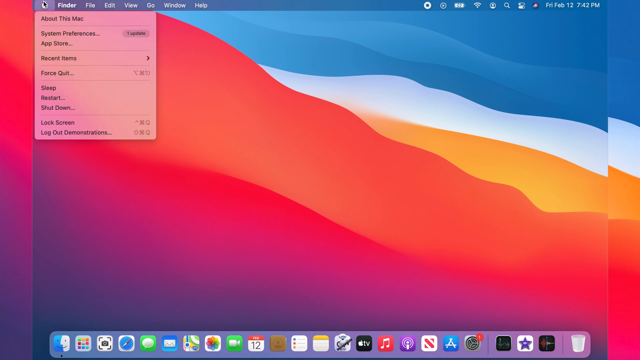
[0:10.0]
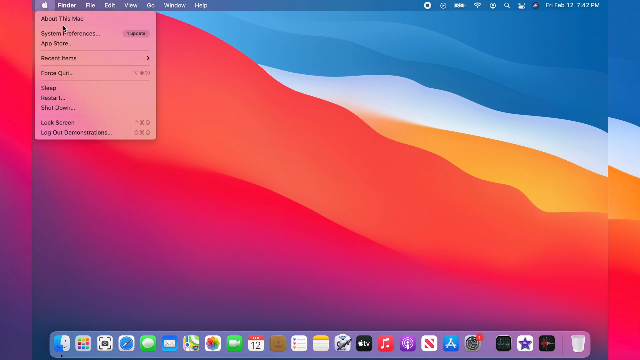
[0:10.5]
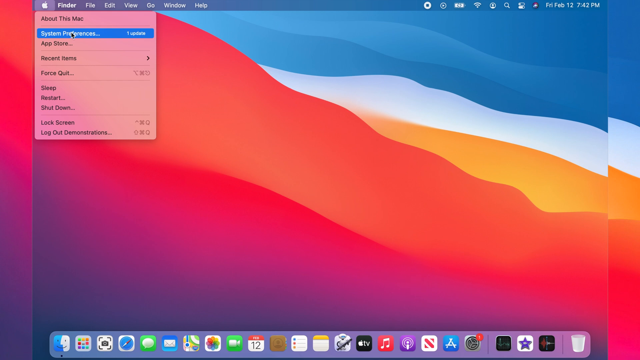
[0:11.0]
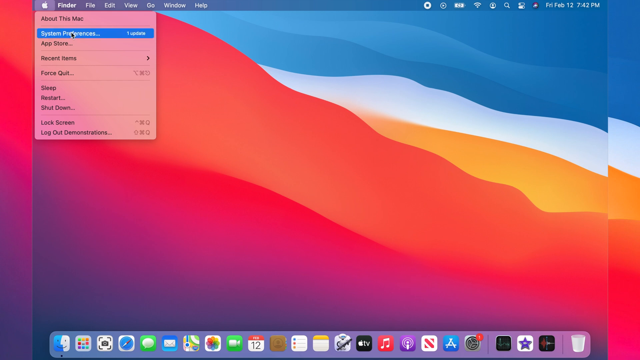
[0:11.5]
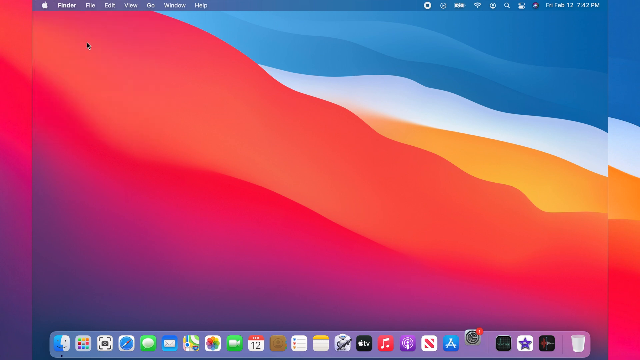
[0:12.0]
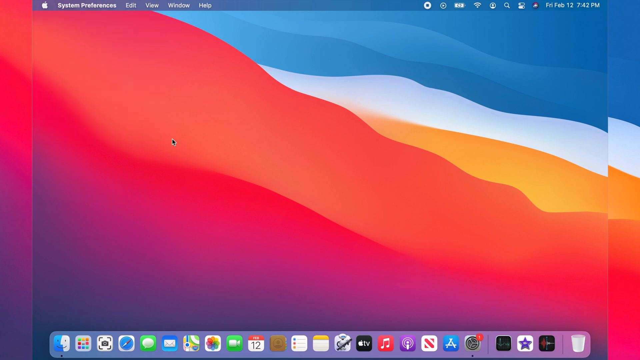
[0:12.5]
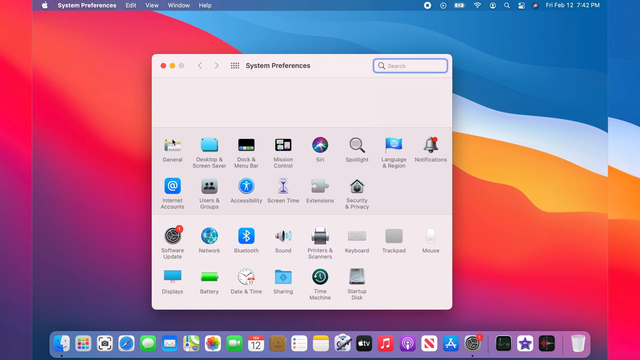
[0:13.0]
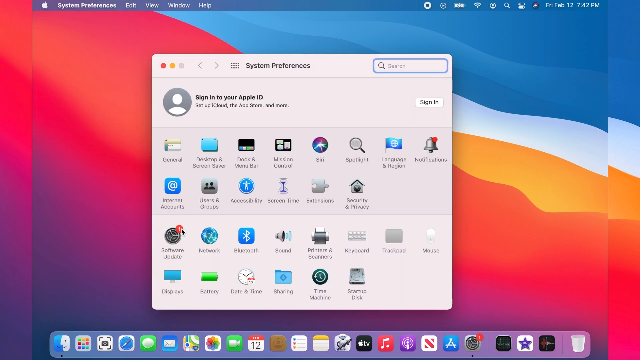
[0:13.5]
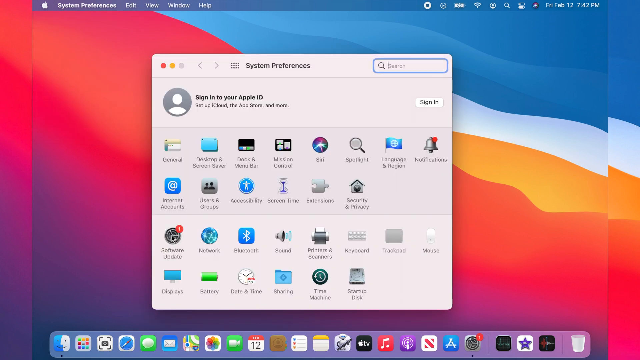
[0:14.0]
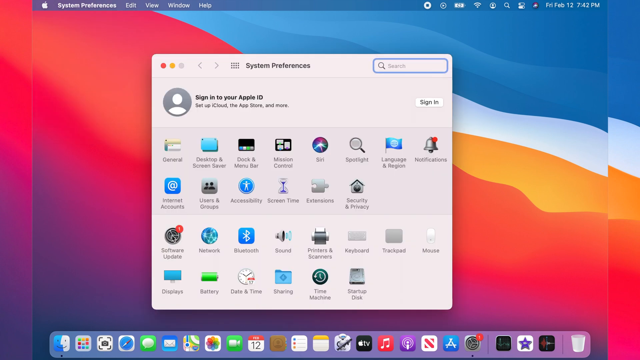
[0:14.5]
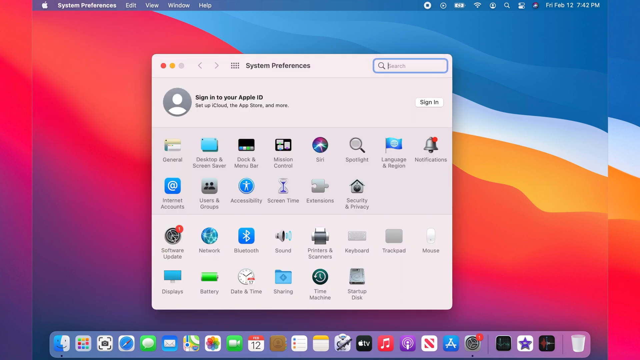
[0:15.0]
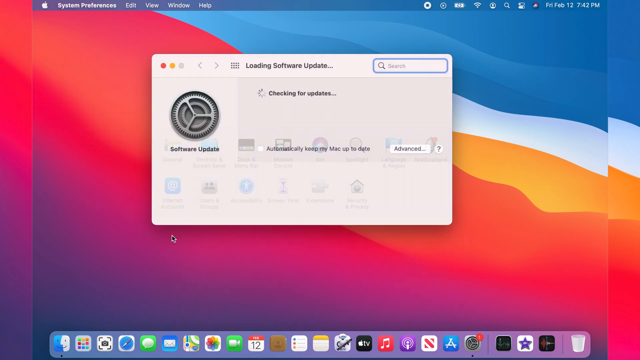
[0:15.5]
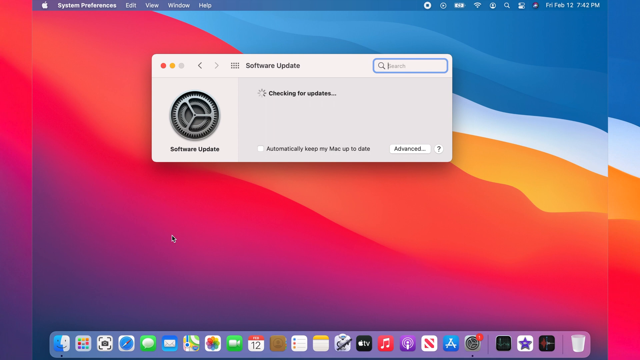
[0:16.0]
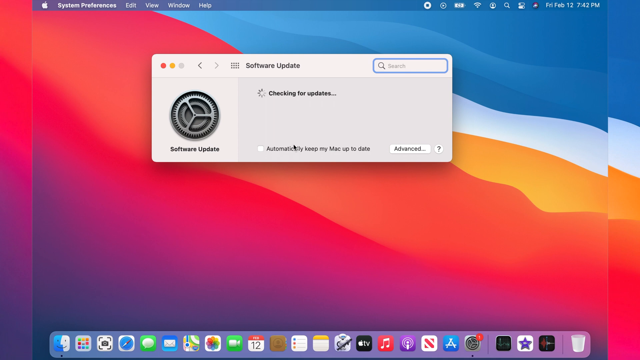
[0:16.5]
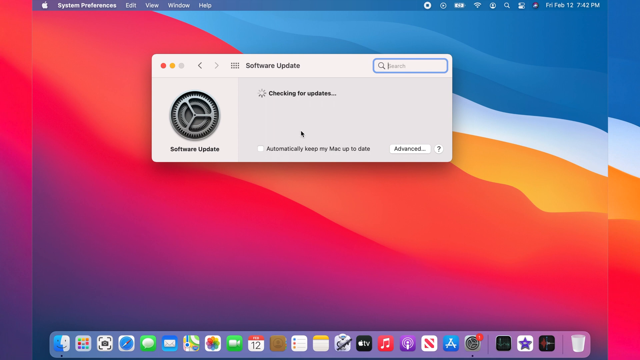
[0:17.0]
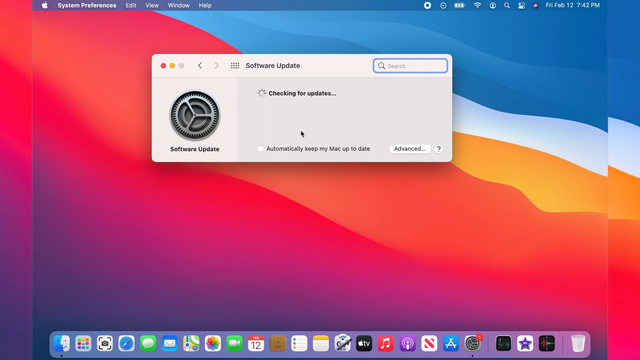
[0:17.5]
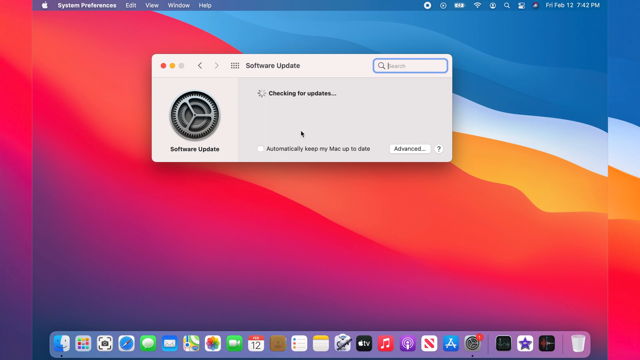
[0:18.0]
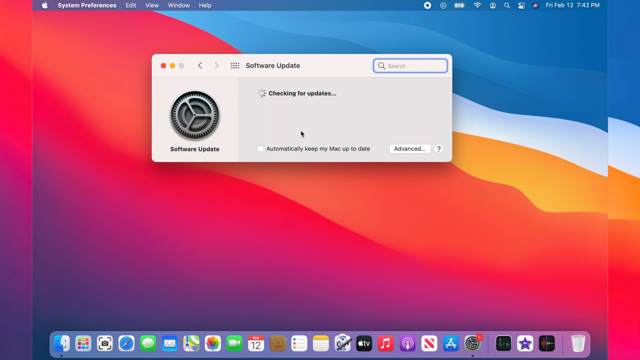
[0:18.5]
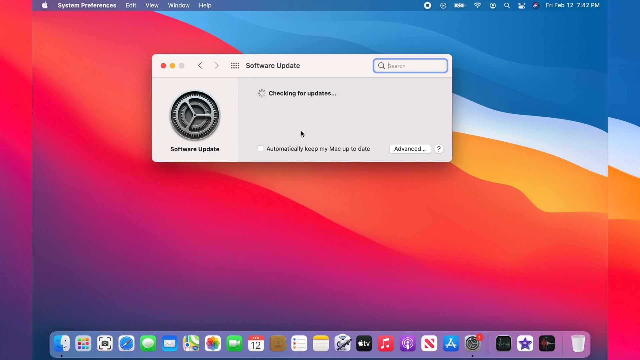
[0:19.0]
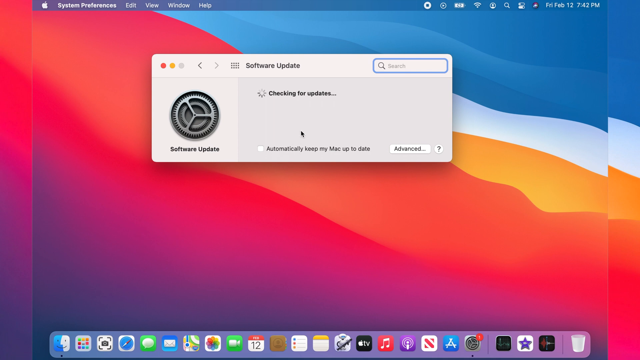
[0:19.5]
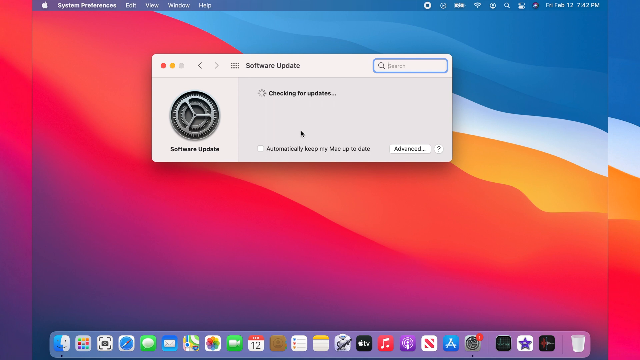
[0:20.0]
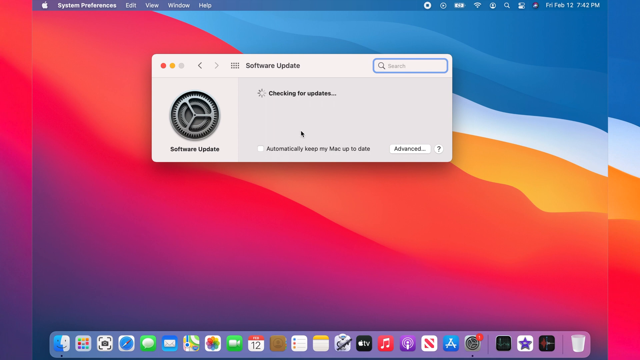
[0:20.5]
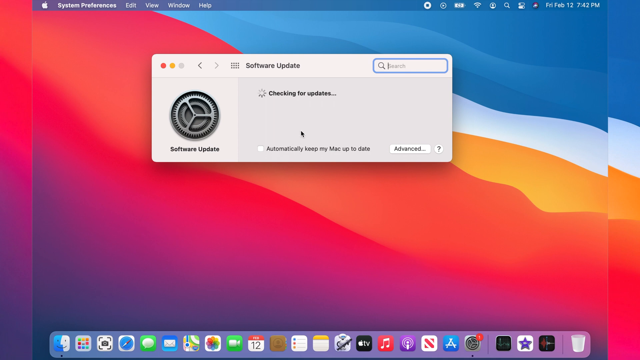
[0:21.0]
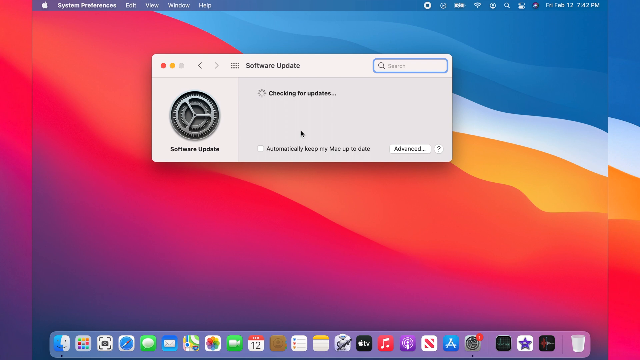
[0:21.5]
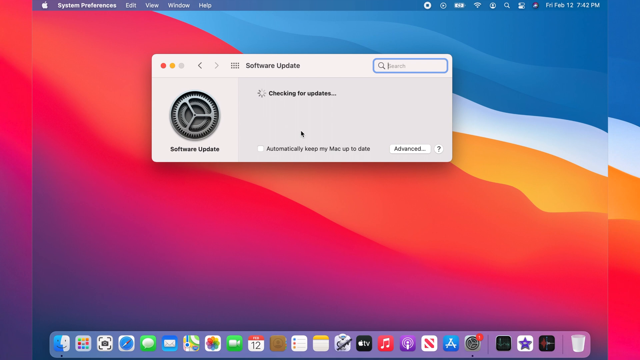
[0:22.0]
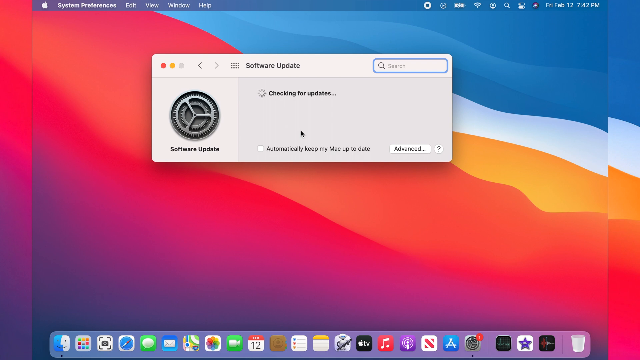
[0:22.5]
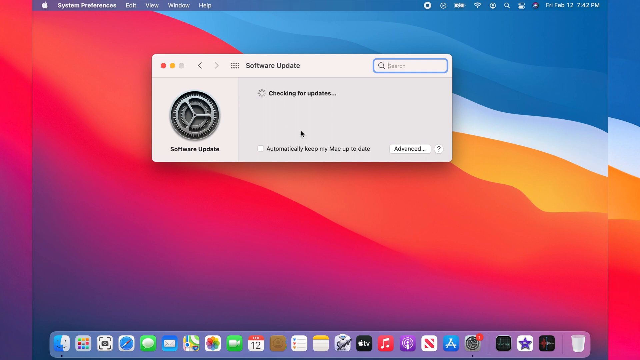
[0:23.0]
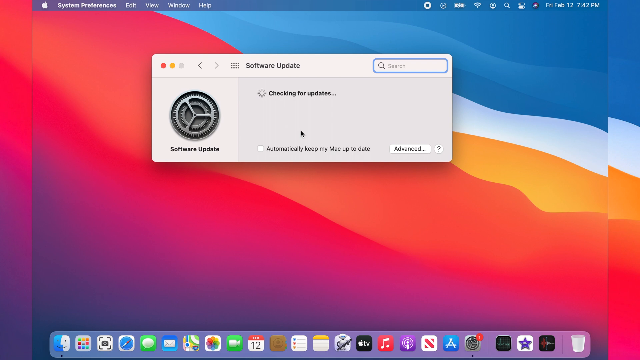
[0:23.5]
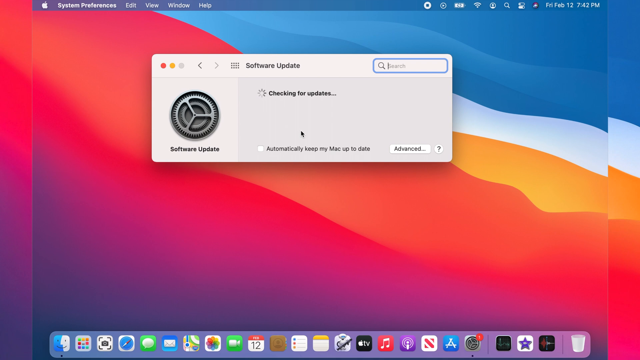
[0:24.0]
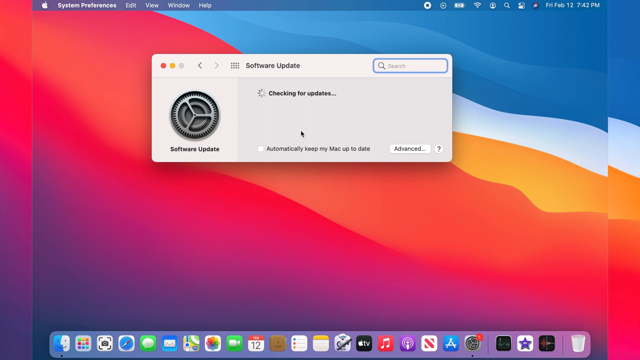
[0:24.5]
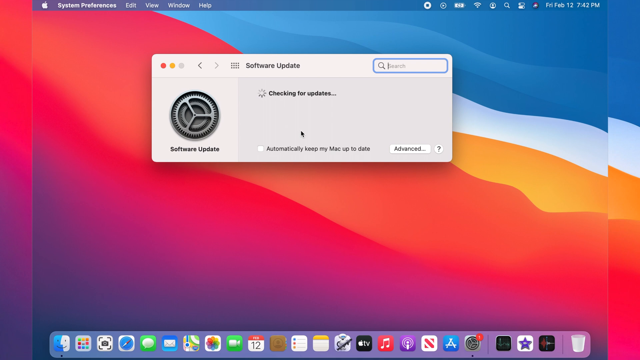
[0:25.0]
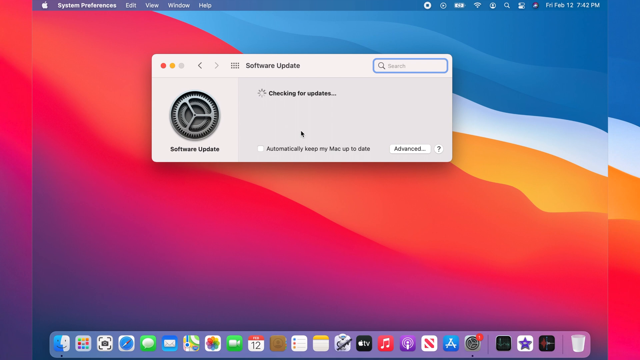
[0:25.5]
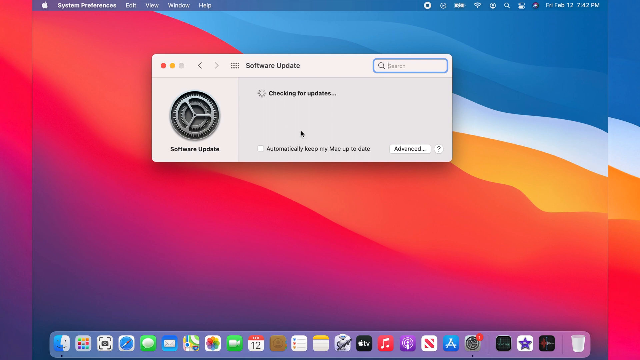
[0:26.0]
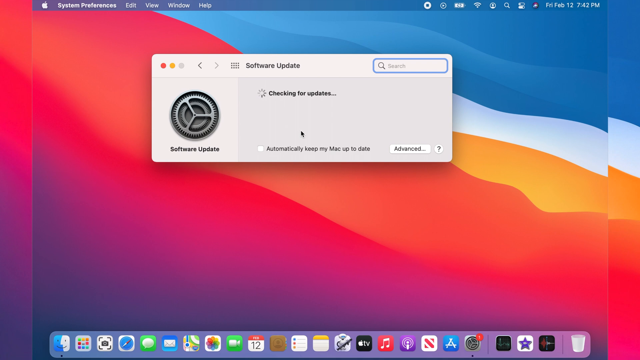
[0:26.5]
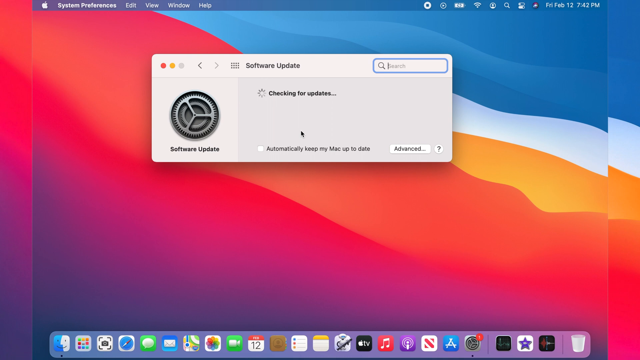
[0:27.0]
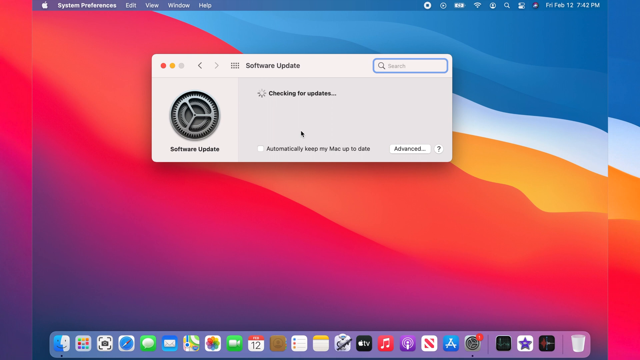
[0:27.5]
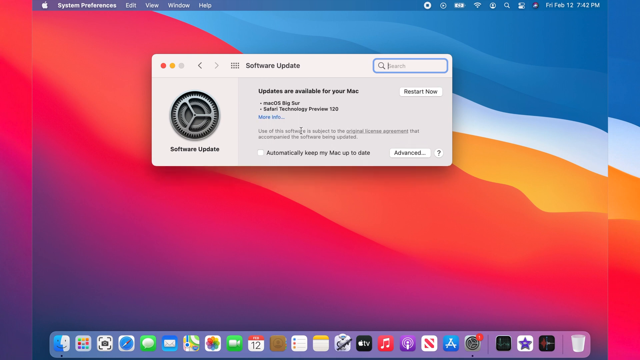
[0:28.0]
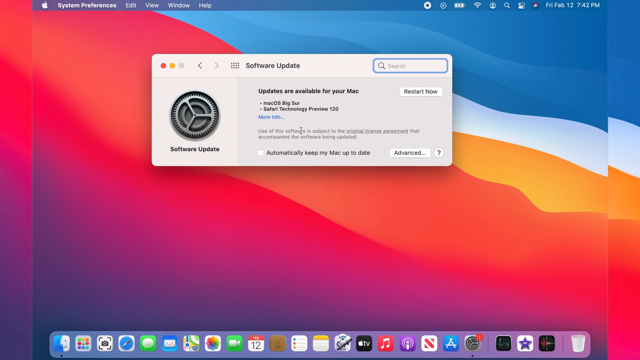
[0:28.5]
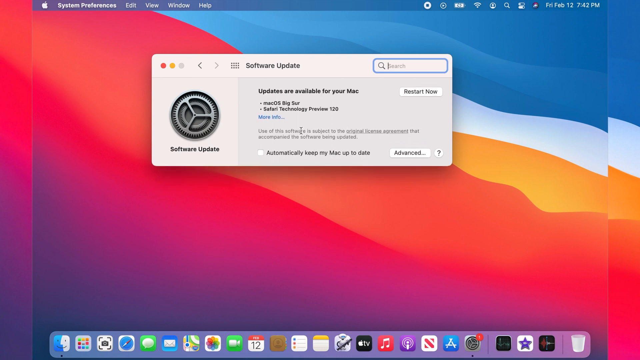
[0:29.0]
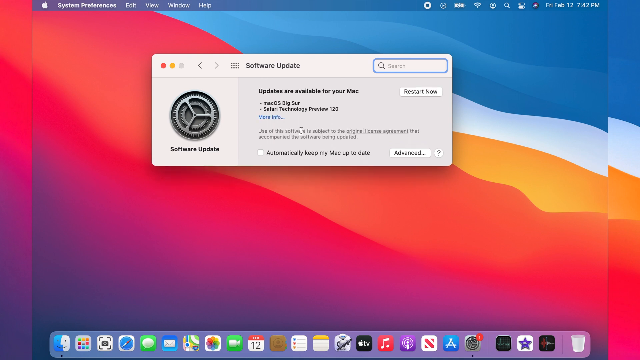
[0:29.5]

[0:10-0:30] On the computer screen, the mouse picks system preferences. Under System Preferences there are lots of folders, including Apple ID, and the mouse picks software updates. There is a red notification about making sure updates are installed. He checks for updates, and the display shows something like a black, grey and white wheel on the left side while it checks. A button that says "automatically keep my Mac updated" is not clicked. The cursor blinks in the search button as it continues checking. An update is found, with the text "Updates are available for your Mac" and a "more info" link in blue, along with an option to restart now. At the bottom there is text about the license that is kind of blurry. The text is black and the update screen is grey.